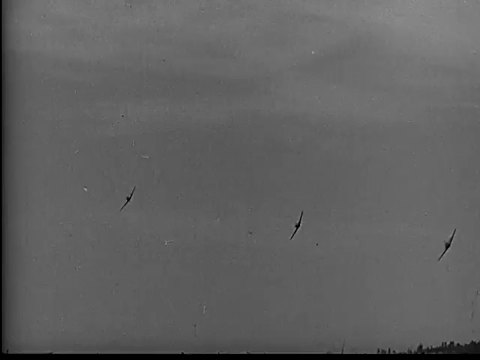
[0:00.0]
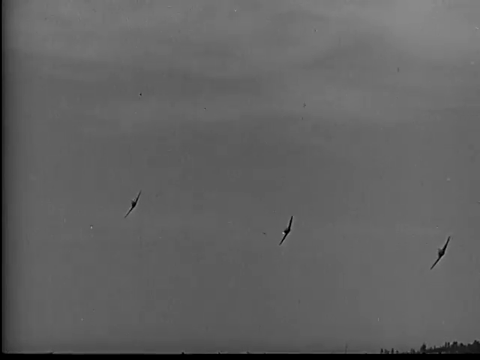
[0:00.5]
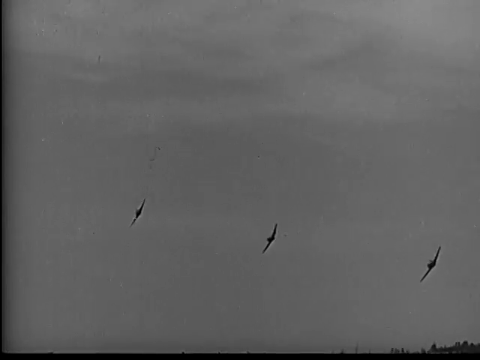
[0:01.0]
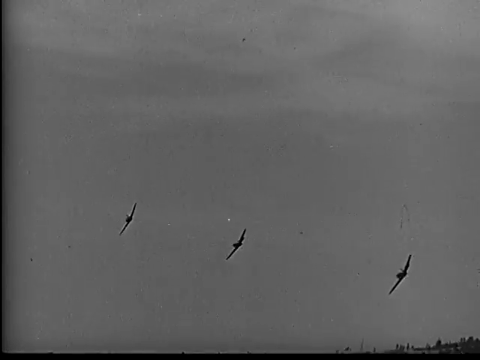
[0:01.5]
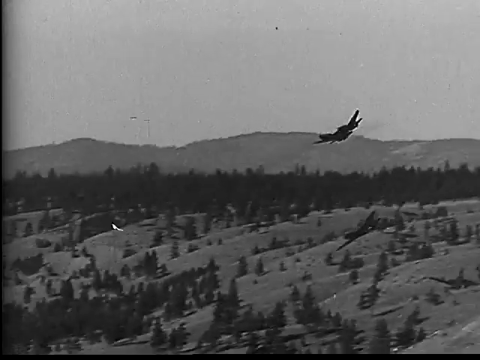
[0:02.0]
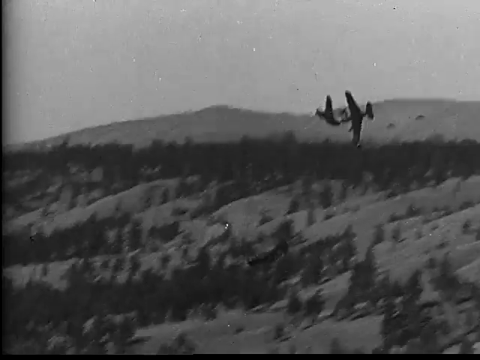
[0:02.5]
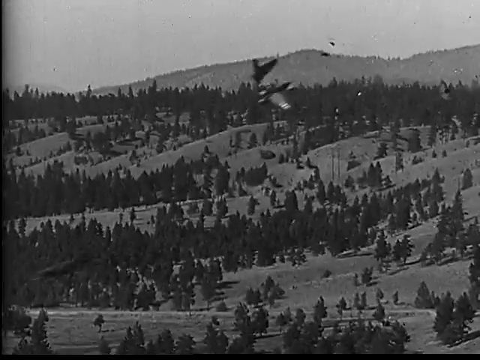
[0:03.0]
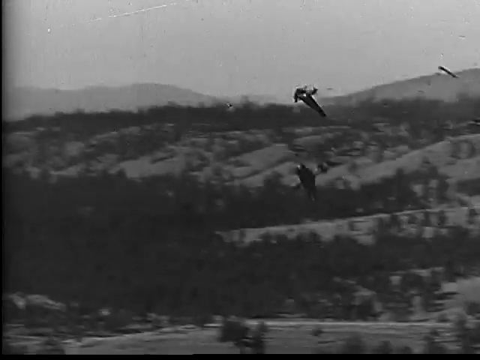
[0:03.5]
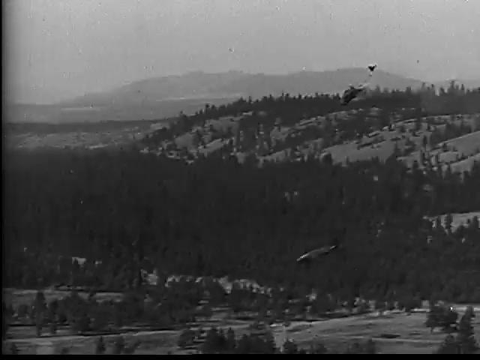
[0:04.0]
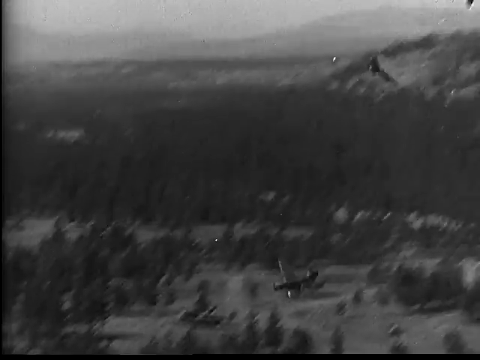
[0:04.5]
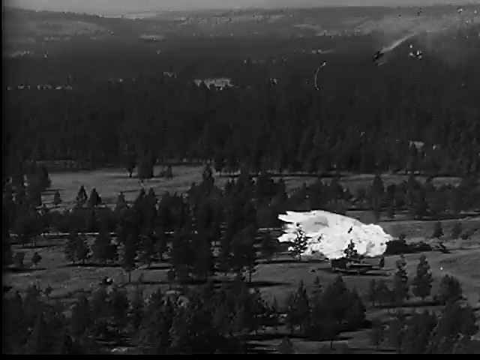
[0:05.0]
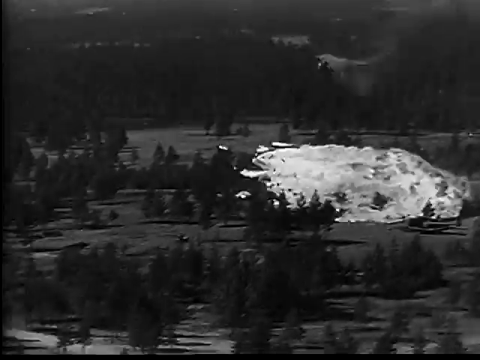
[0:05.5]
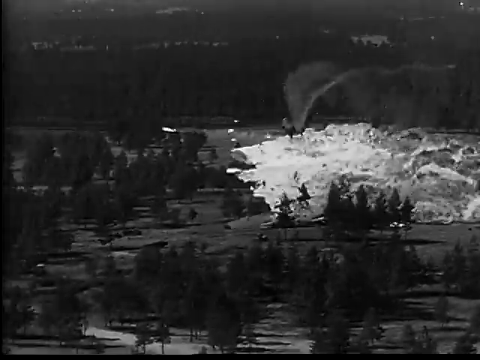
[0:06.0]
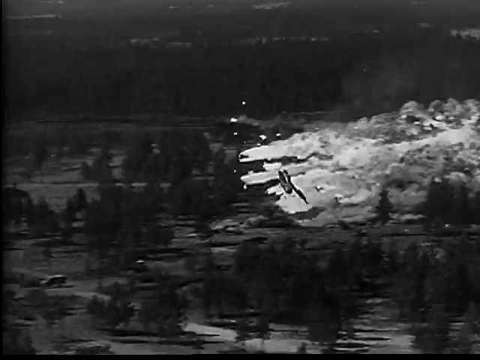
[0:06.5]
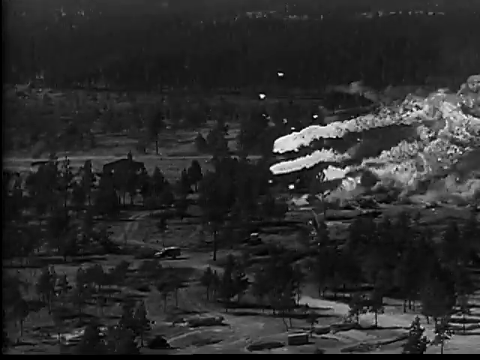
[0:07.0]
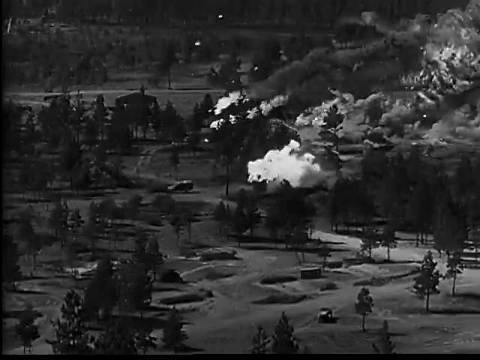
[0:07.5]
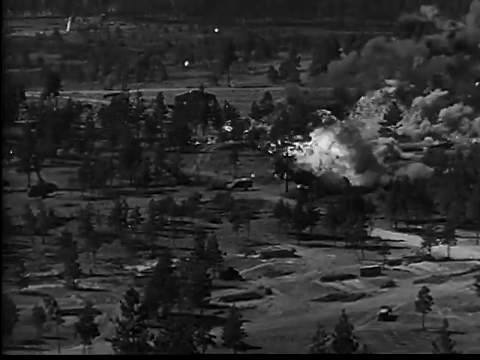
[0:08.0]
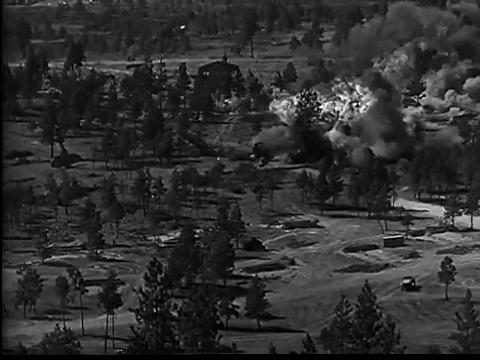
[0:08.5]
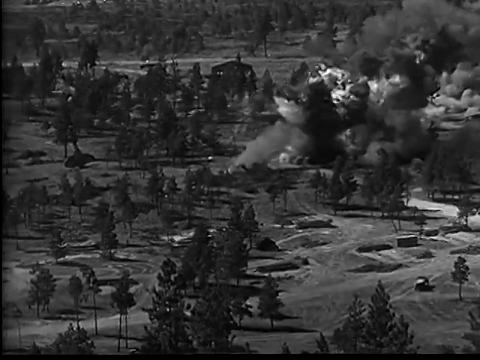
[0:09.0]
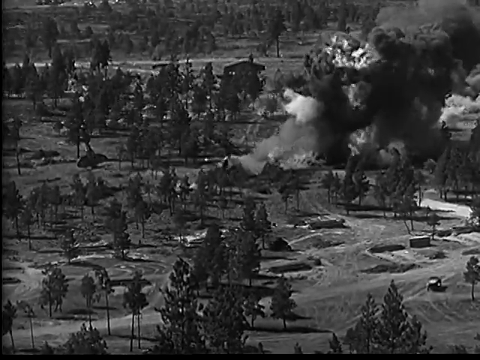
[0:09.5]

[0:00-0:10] In black and white footage, fighter planes move along and crash into one another. Debris flies about as the planes get very low to the ground, and as they crash they create huge flames and a massive explosion. Fuselage and other pieces of the planes are strewn everywhere around a wooded area. There are a lot of trees, buildings and some cars, and a huge amount of devastation. The footage appears to have been filmed a very long time ago, possibly around the 1940s. Three planes are visible; two of them appear to come together by accident, seemingly through a miscalculation by one or both of the pilots.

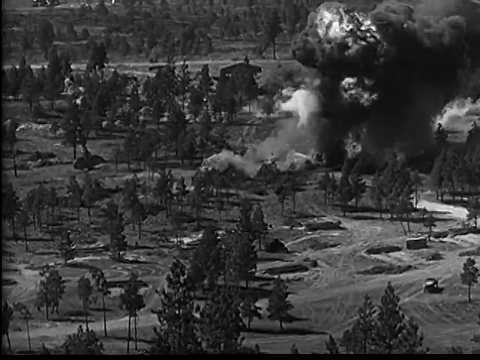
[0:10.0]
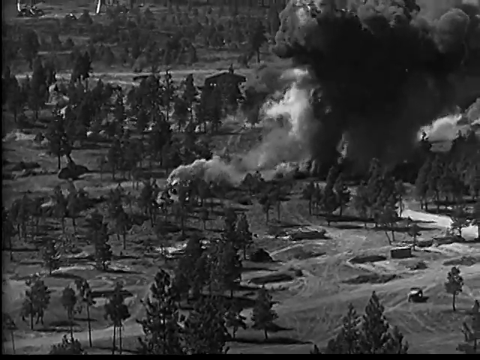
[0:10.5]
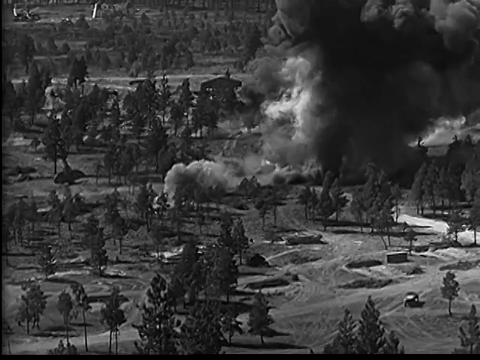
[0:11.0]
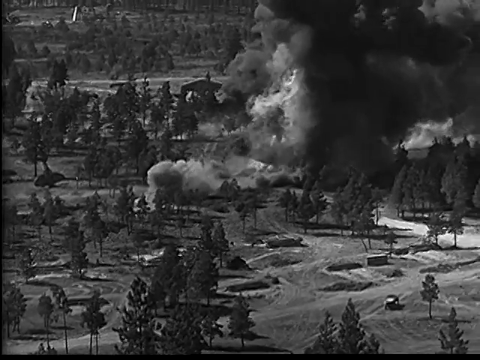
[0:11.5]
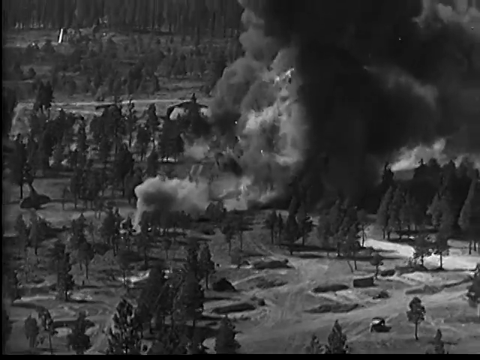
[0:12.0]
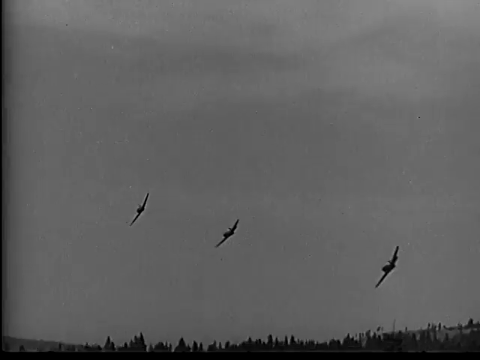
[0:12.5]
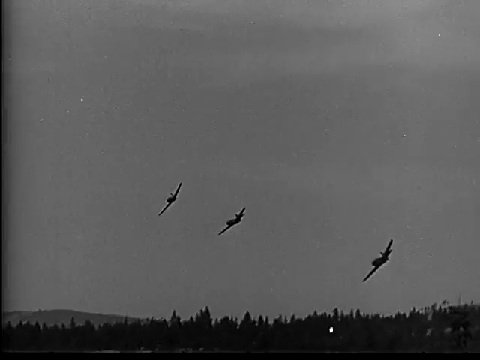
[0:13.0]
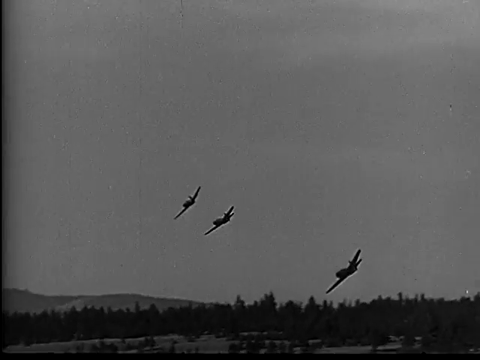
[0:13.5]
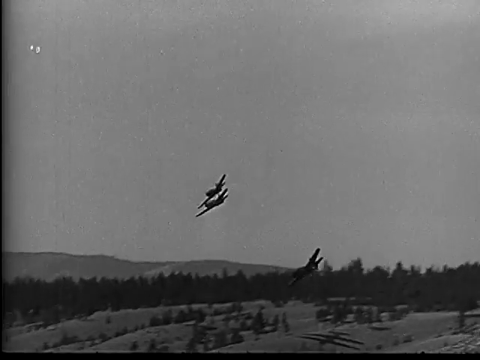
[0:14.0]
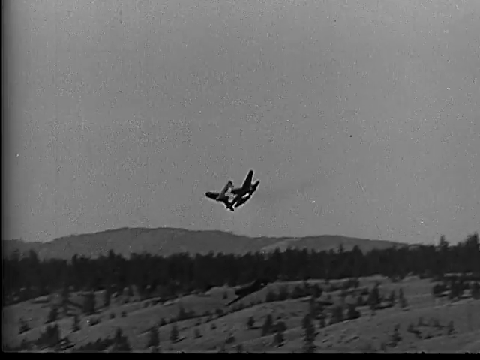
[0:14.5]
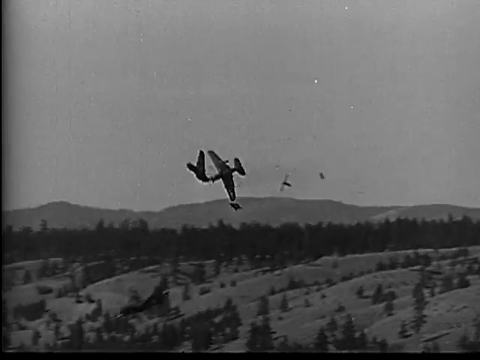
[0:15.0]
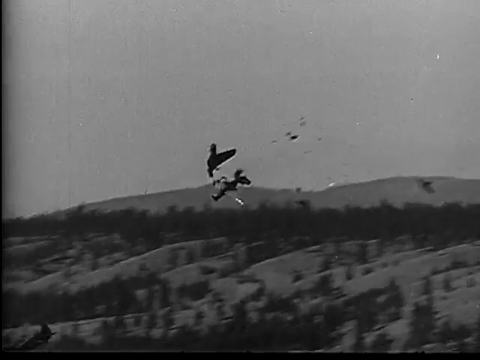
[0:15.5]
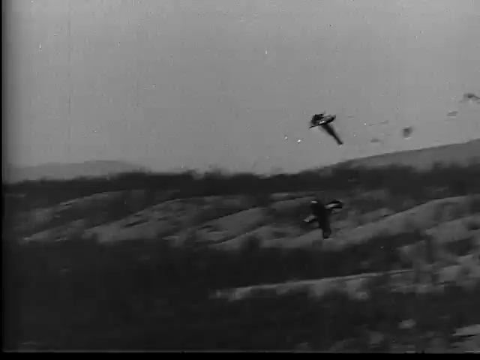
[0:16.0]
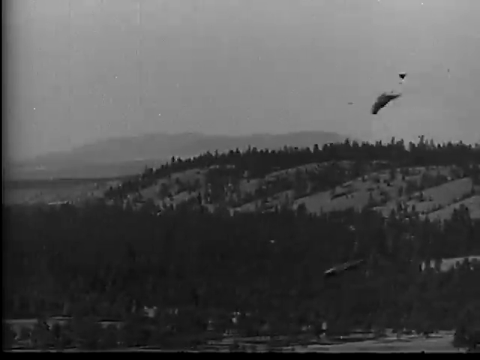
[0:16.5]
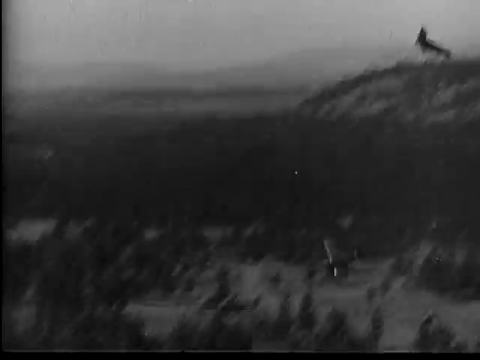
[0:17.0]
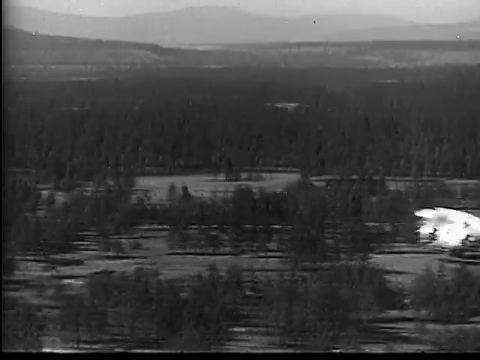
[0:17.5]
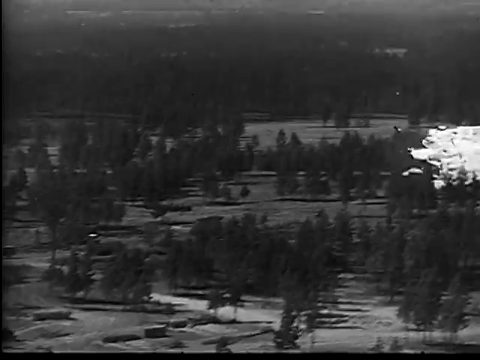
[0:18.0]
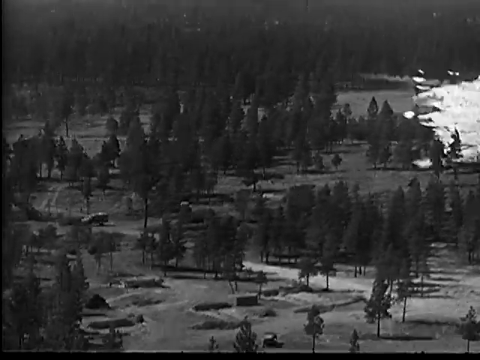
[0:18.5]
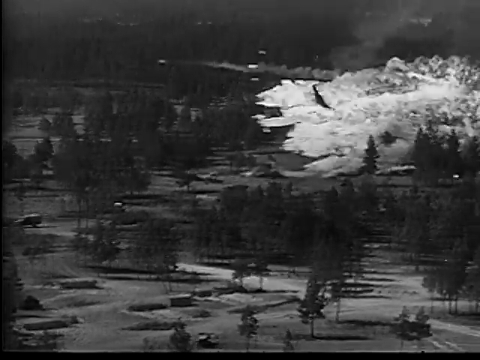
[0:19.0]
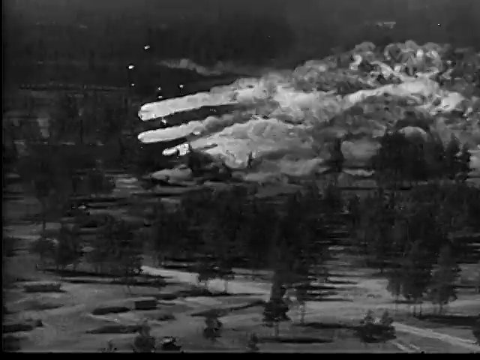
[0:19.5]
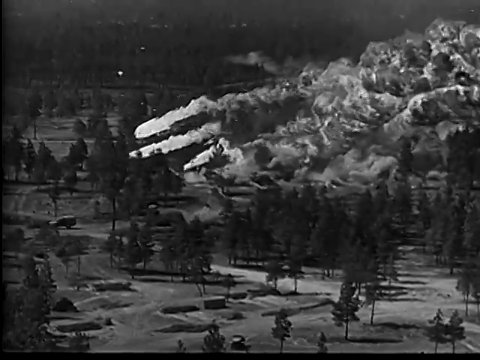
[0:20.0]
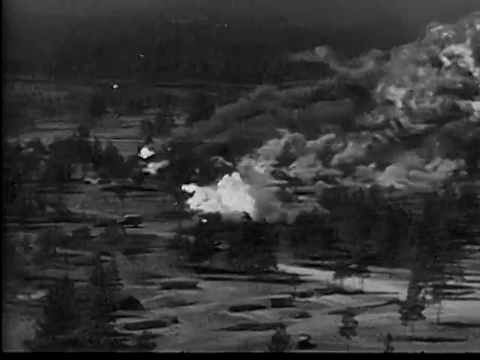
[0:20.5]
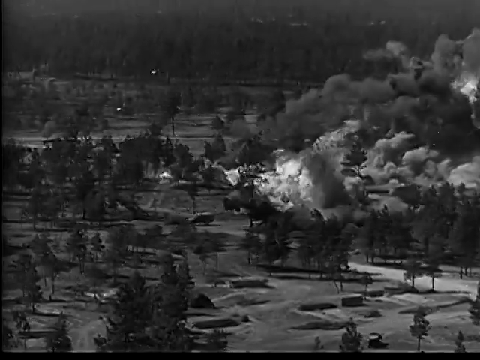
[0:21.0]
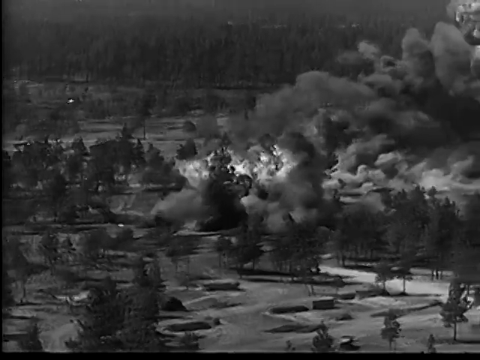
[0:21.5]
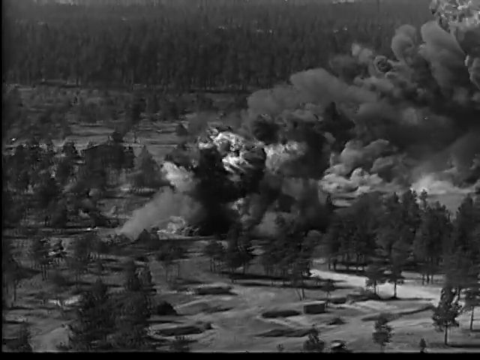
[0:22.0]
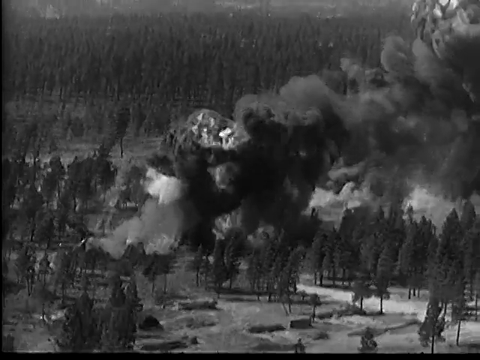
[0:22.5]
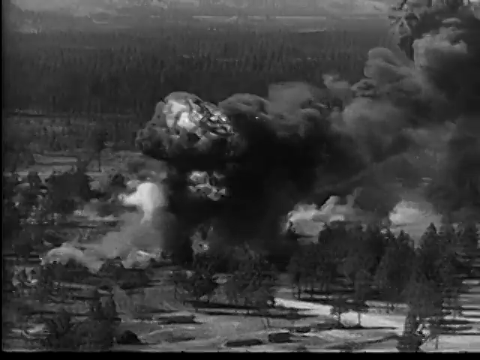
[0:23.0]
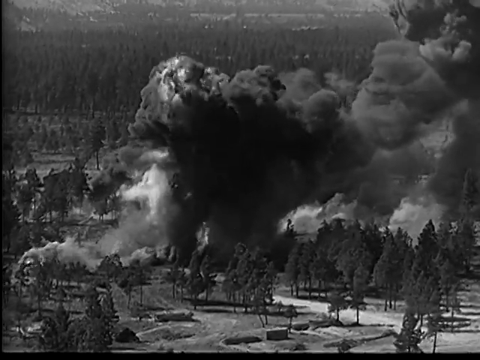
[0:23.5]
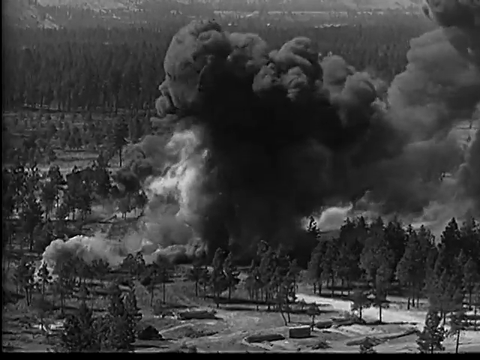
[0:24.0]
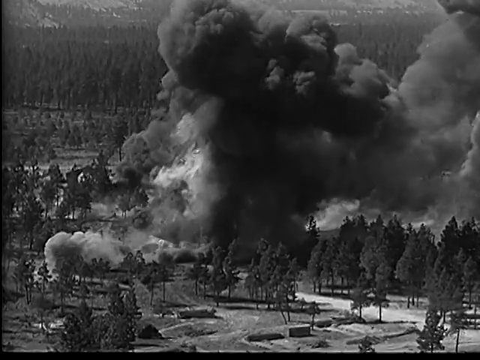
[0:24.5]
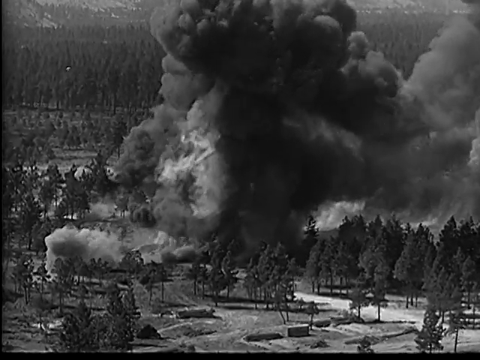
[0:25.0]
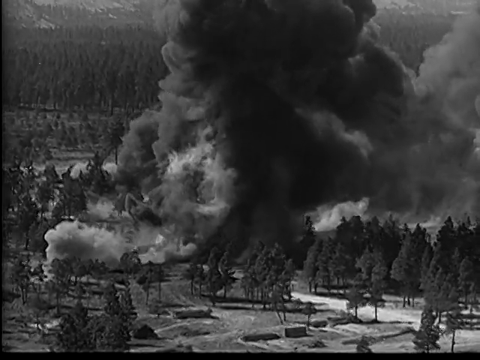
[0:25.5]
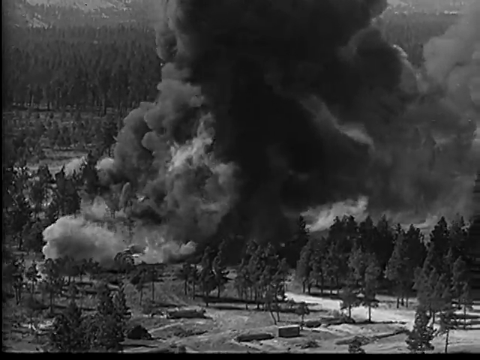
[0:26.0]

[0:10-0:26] Flames go up into the air, and another image of the planes crashing appears, seemingly the same accident from a slightly different angle, with smoke and fumes. The crash creates a devastating explosion with lots of fire in the wooded area. The two planes clip each other, which causes one of the fighter jets to turn completely upside down before crashing right into the ground and exploding immediately upon impact. The same happens to the other fighter jet, but it lands a couple of seconds afterwards and does not create as big an explosion. Both planes go down and create a lot of devastation in the wooded area, which has trees scattered around. Cars are visible in the background, along with something that looks like it may be a barn, which has not been hit by the wreckage.